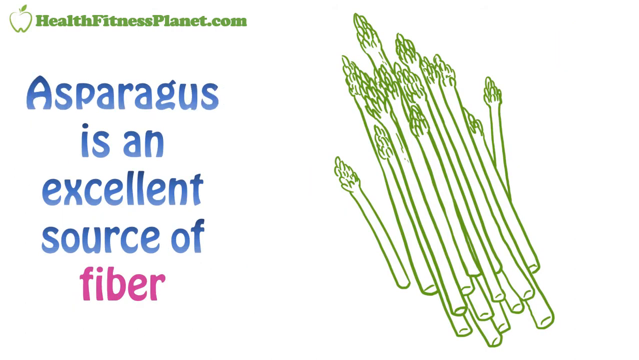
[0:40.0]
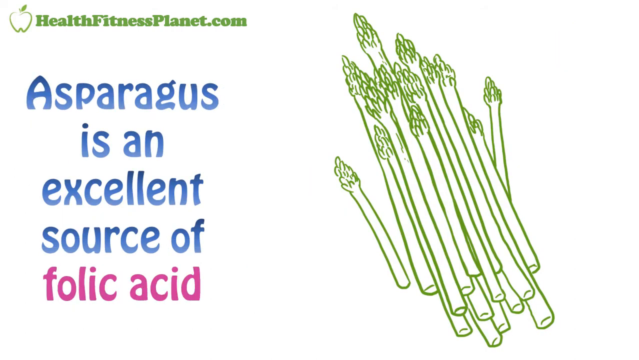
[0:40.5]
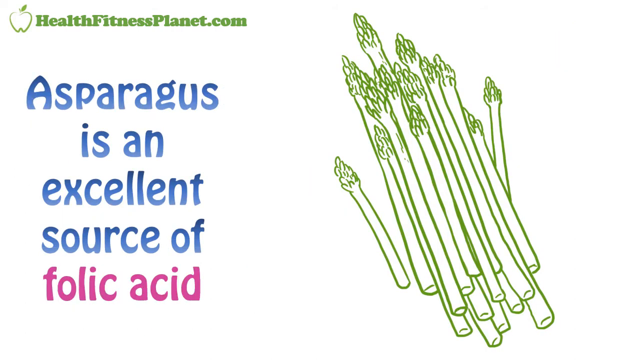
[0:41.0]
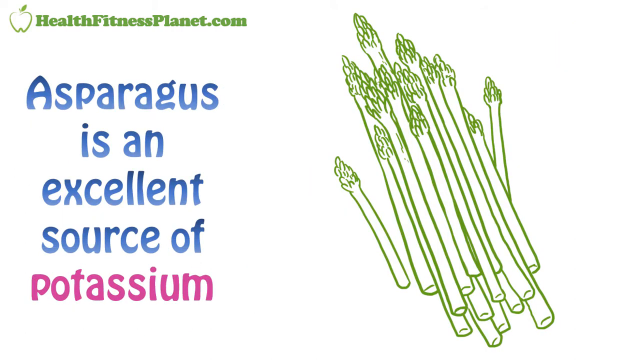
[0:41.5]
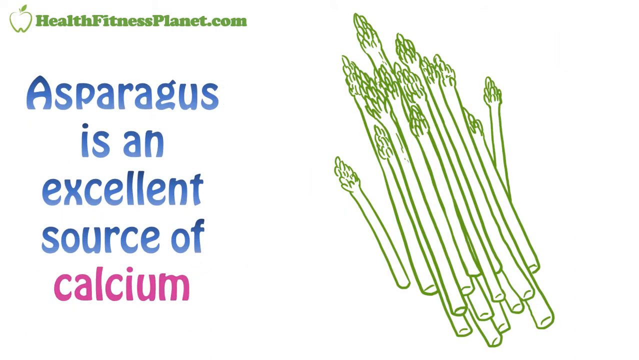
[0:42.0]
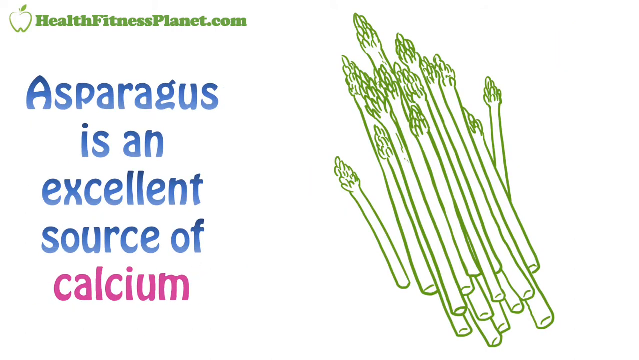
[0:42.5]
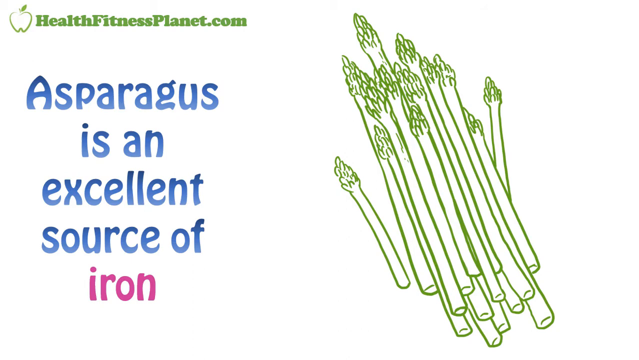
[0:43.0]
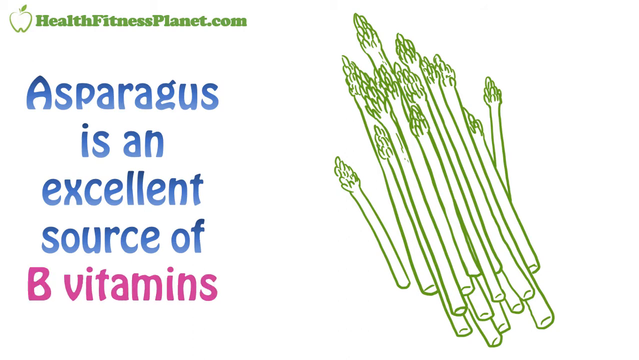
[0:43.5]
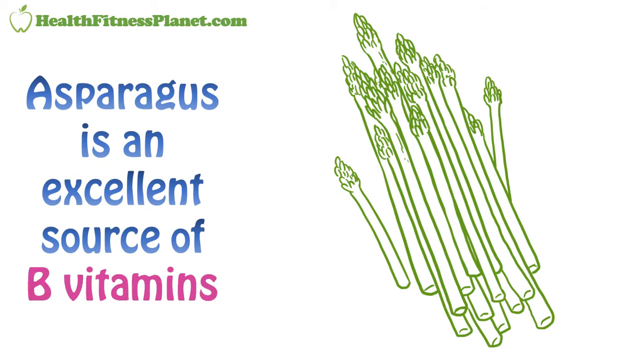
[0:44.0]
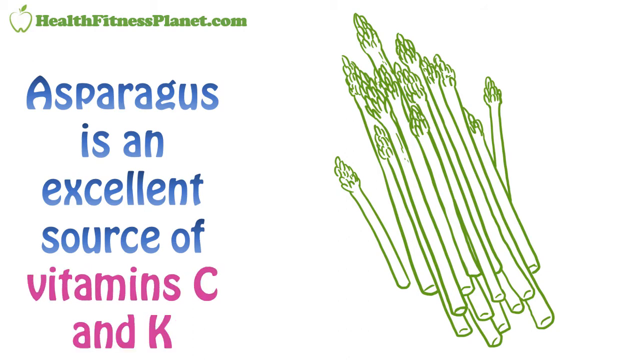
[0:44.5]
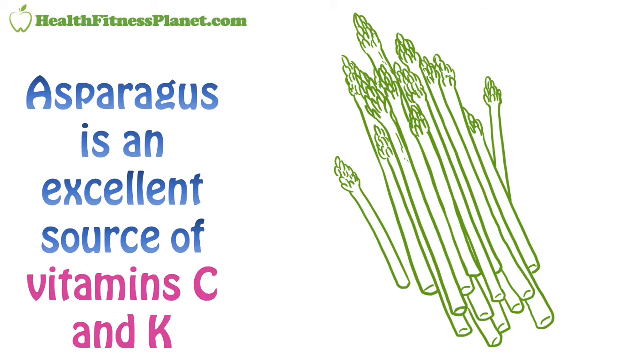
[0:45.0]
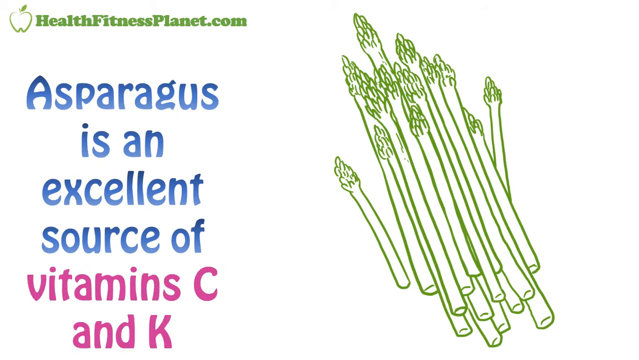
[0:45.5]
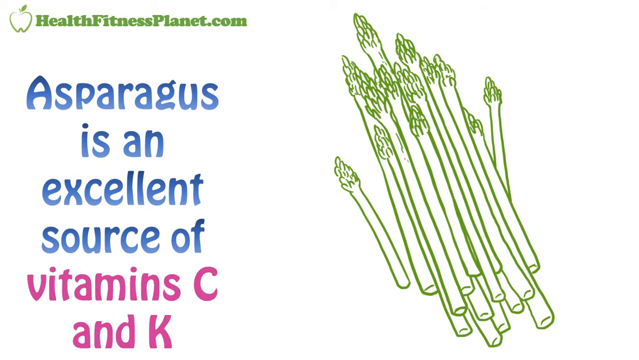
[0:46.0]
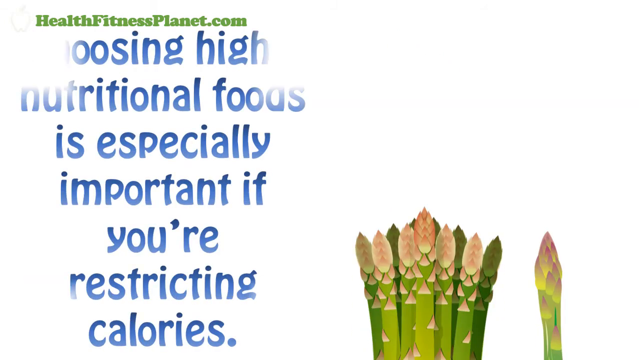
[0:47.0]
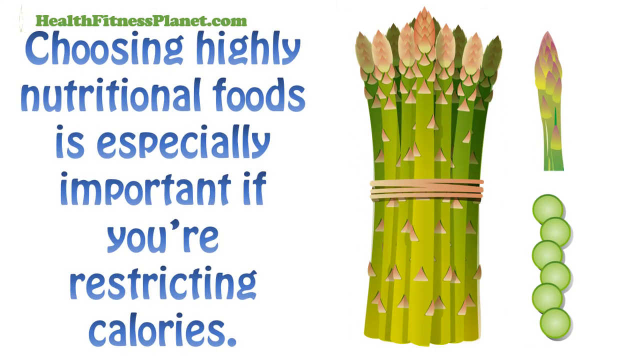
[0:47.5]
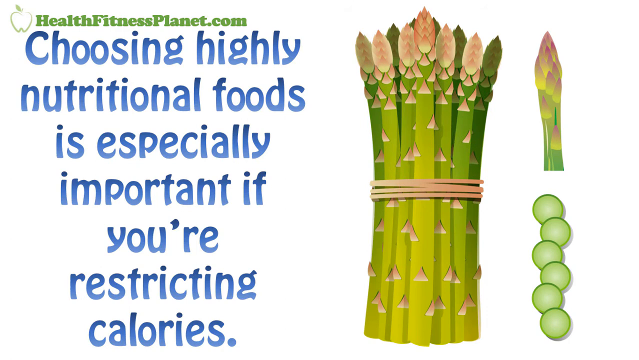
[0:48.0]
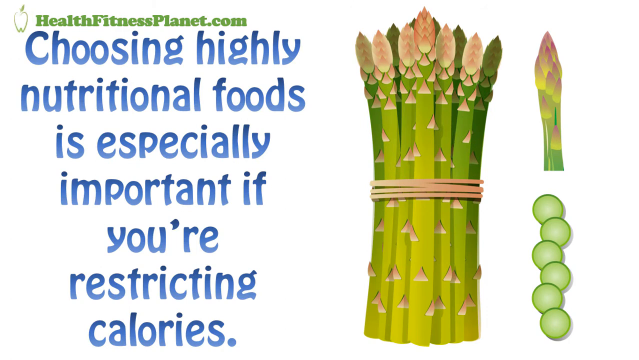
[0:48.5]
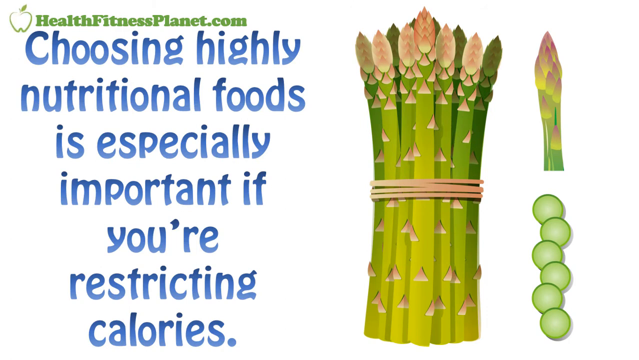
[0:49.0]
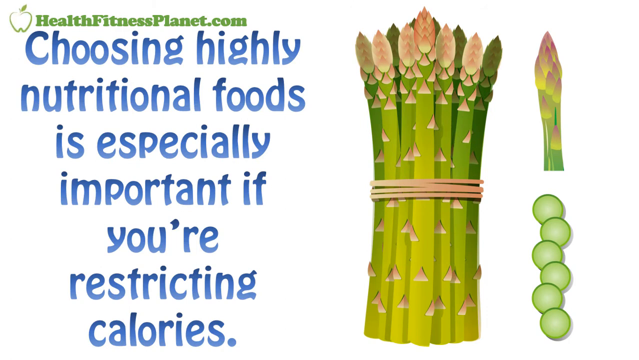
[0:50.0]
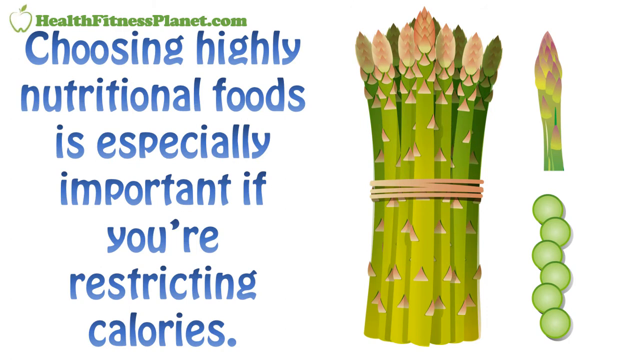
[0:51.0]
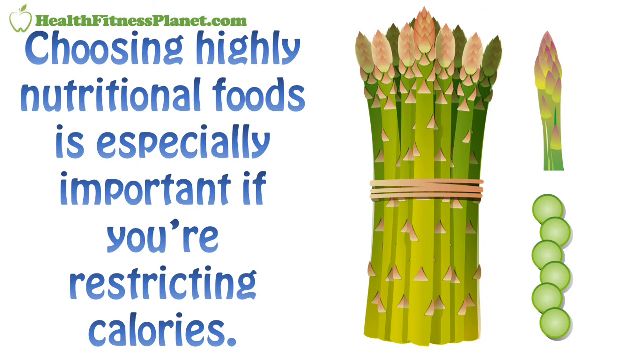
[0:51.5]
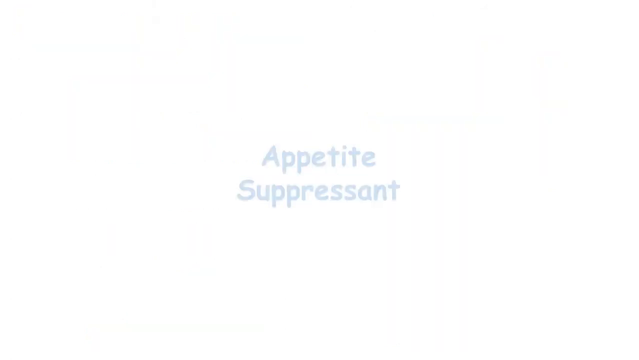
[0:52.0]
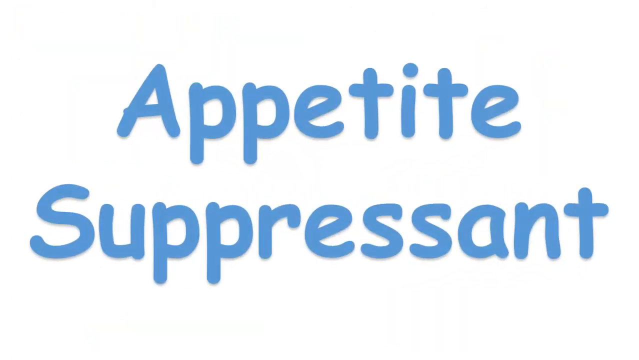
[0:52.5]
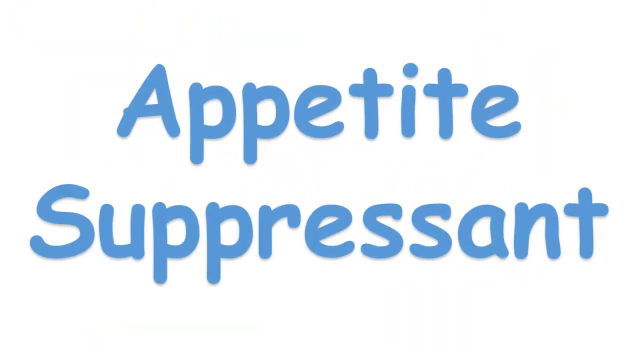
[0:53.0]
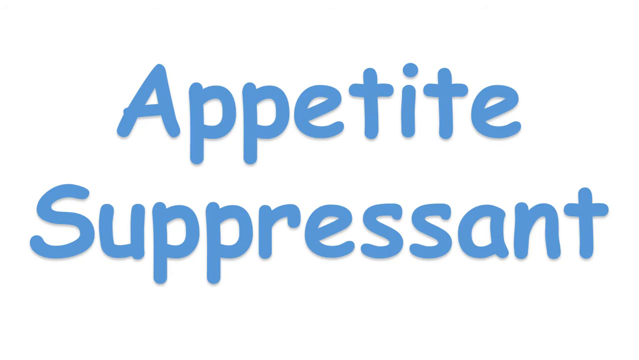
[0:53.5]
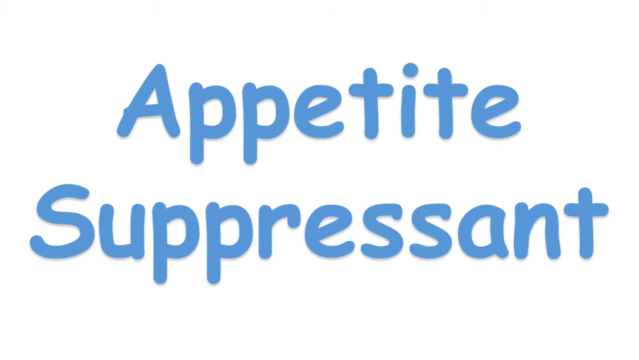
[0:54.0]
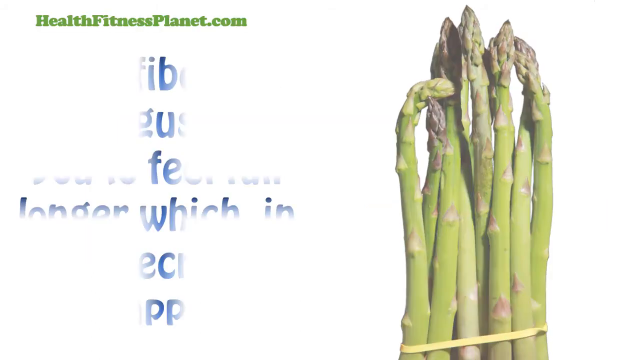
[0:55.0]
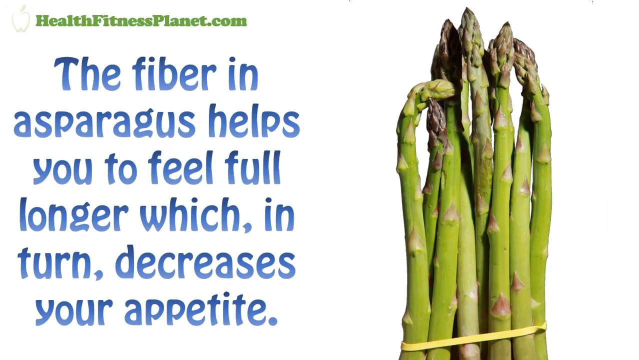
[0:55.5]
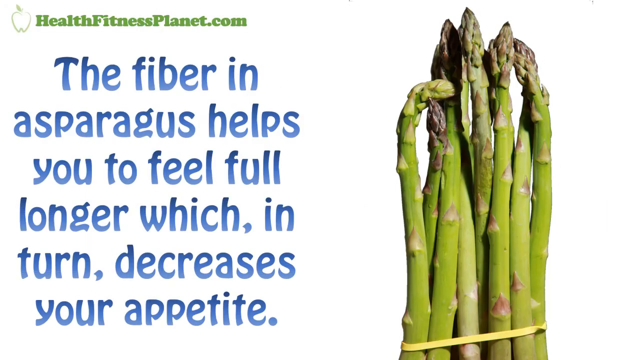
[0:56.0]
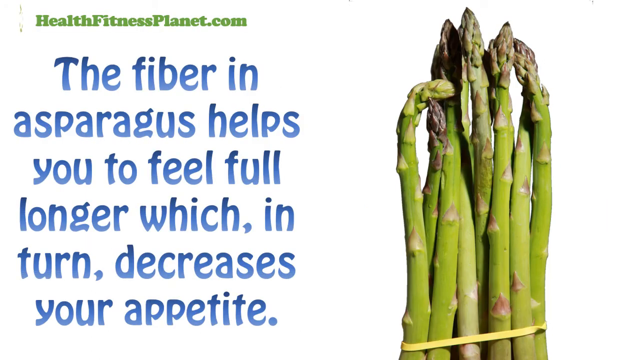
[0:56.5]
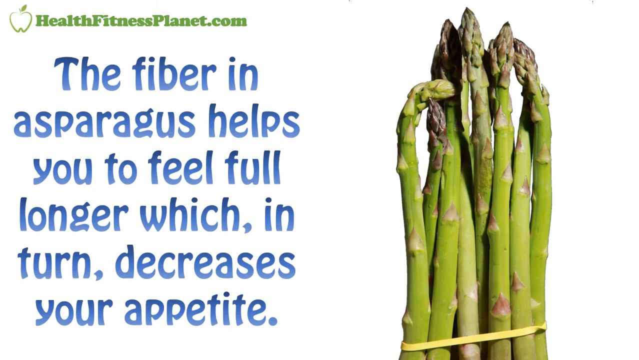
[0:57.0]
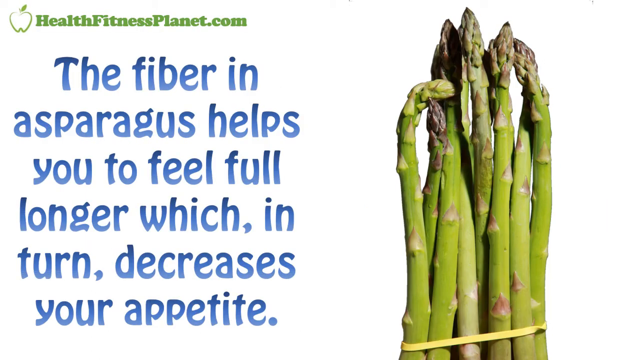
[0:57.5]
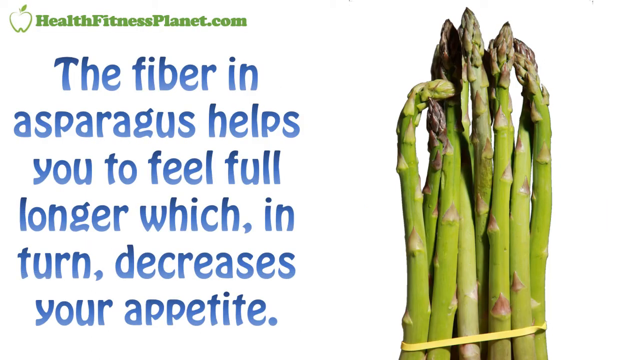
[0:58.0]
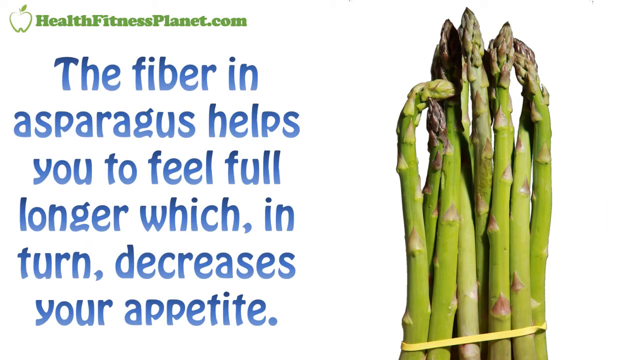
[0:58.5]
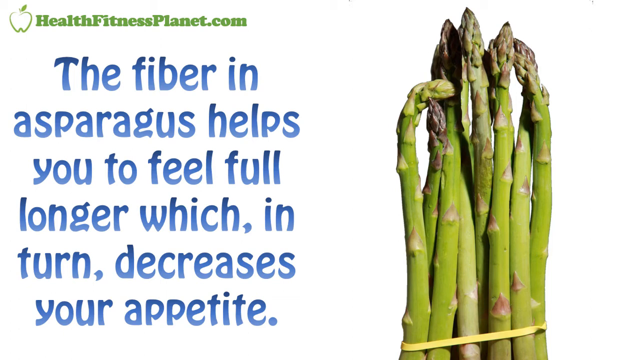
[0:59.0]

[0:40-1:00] A bunch of asparagus stalks is on the right, and on the left the text says "Asparagus is an excellent source of fiber," in blue except for the word "fiber," which is red. As the screen changes, the blue words stay the same while the red word changes to "folic acid," then "potassium," then "calcium," then "iron," then the phrase "B vitamins," and then "vitamins C and K," each in red, with the blue words staying the same above it the entire time. The screen then changes to a colorful cartoon on the right of a bunch of asparagus spears held together with a rubber band; to its right is an illustration of an asparagus tip, and below that a cross section of the stem cut into circles. On the left, the text reads "Choosing healthy foods is especially important if you're restricting calories." The screen changes again and the words "appetite suppressant" come up in blue. Next, a photograph of actual asparagus appears on the right, and the blue text on the left says "The fiber in asparagus helps you to feel full longer, which in turn decreases your appetite."